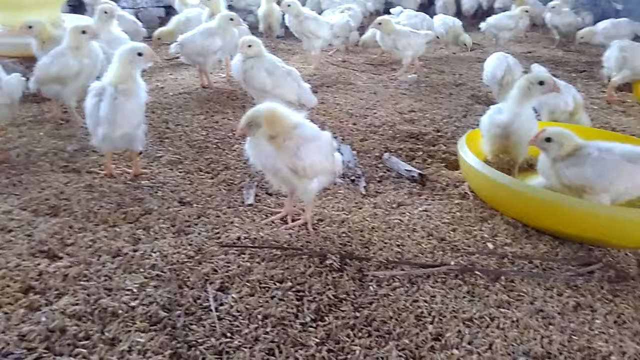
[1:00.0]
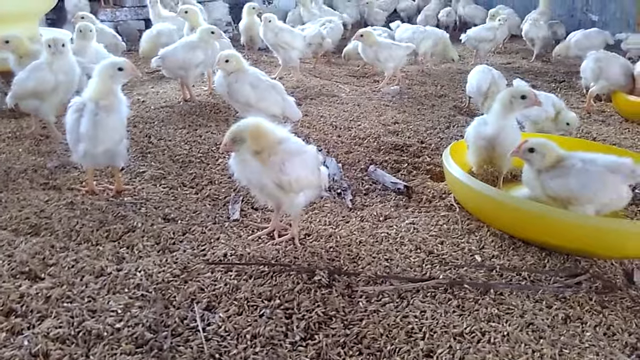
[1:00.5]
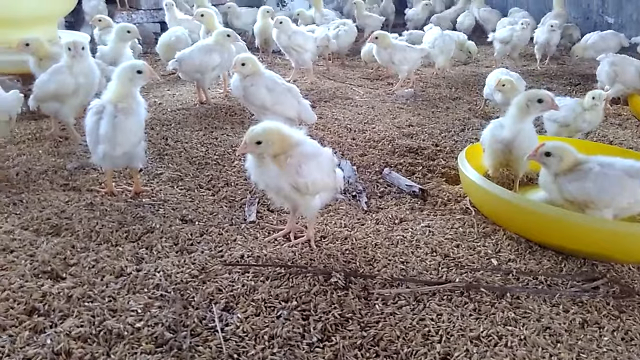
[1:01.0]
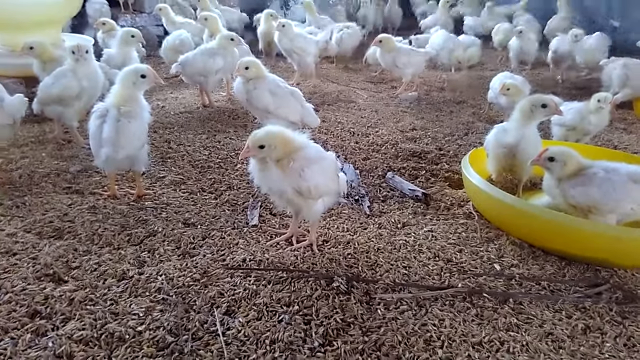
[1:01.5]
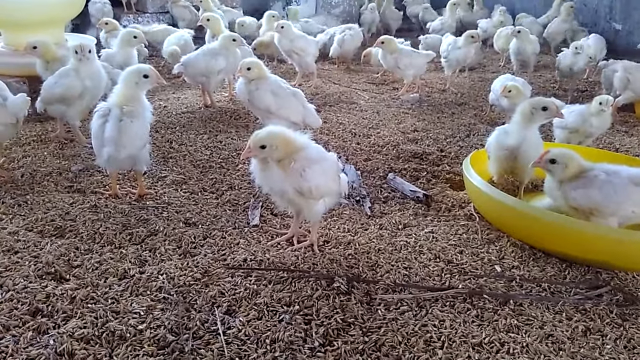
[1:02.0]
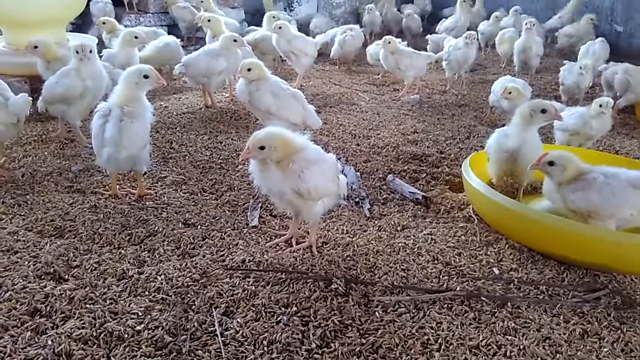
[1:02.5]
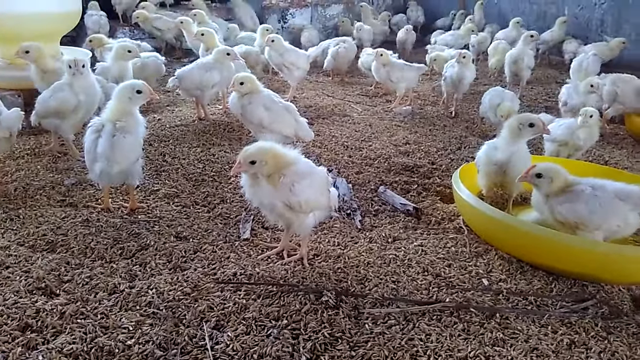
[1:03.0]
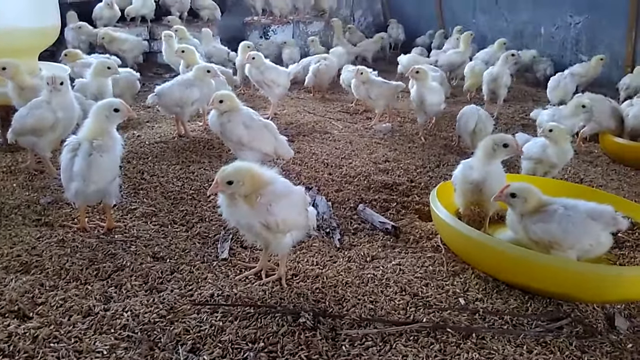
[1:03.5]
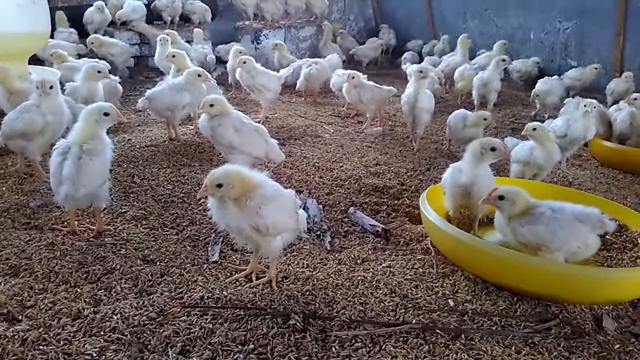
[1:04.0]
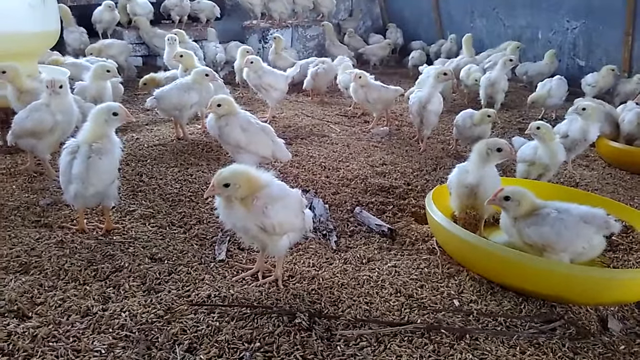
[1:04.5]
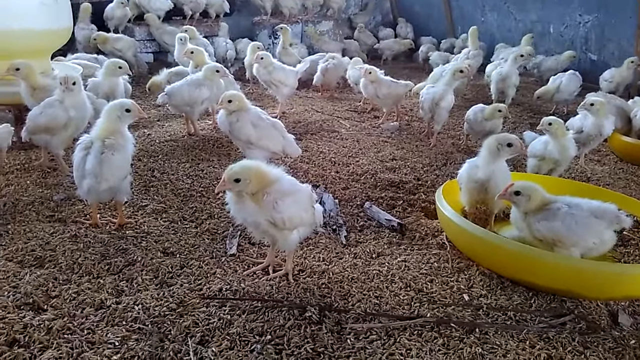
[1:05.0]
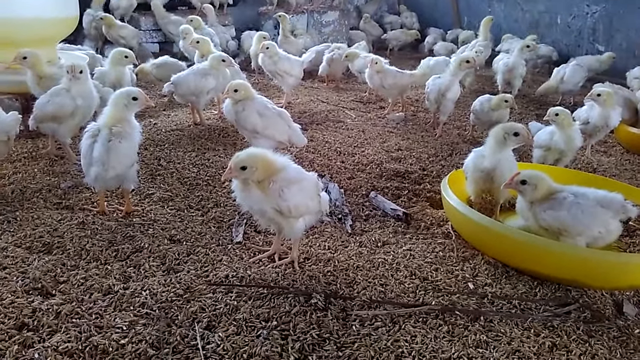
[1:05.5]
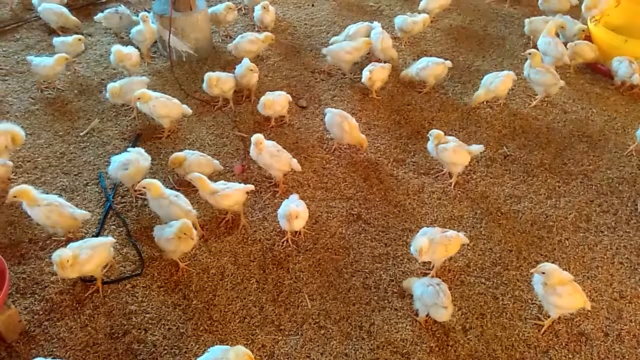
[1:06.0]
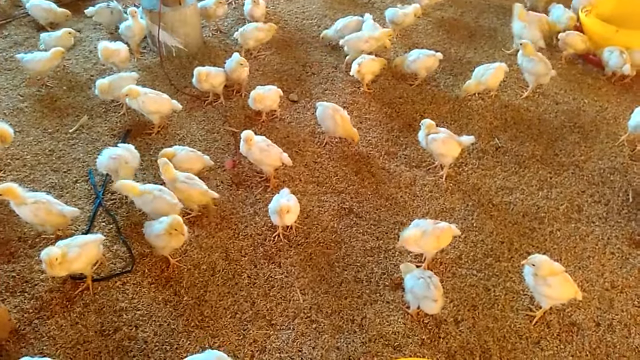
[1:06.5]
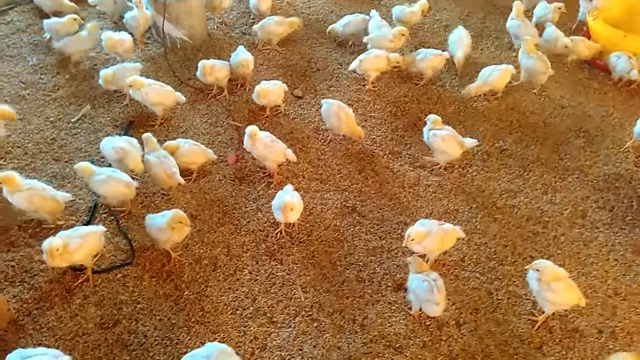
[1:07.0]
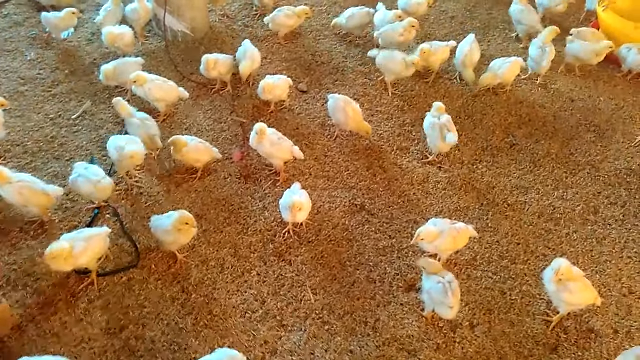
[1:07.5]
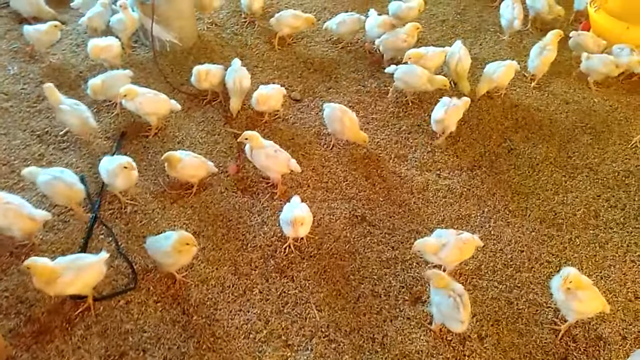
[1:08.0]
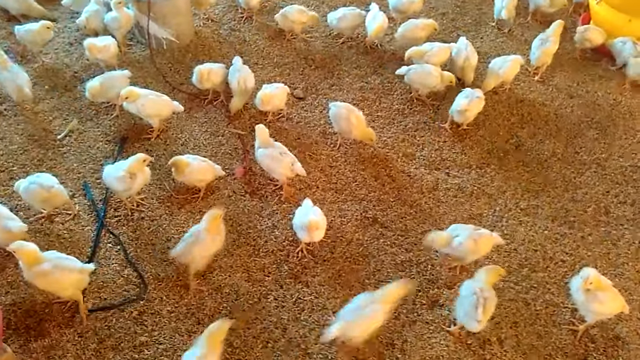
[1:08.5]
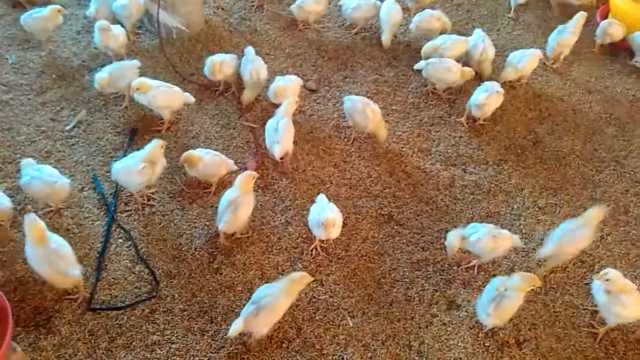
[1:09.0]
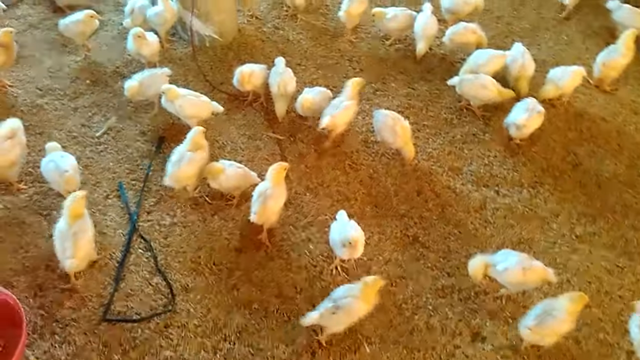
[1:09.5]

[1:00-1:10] The handheld camera shakes slightly as it focuses on 30-plus baby chicks inside a barn-type environment. Small pellets cover the ground the chicks walk on, there are a couple of food trays, and many chicks are in the background, partly out of view. The chicks closest to the camera mostly stay motionless, while those farther away move around much more. The scene then changes to an overhead shot of a very similar environment. Part of a black hose is visible on the left, possibly for filling the water. The chicks here mostly stand still, a couple of them kind of moving slightly, as one chick runs from the bottom of the screen to about the middle right.